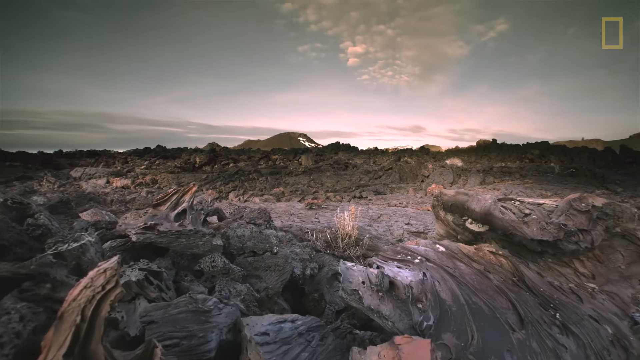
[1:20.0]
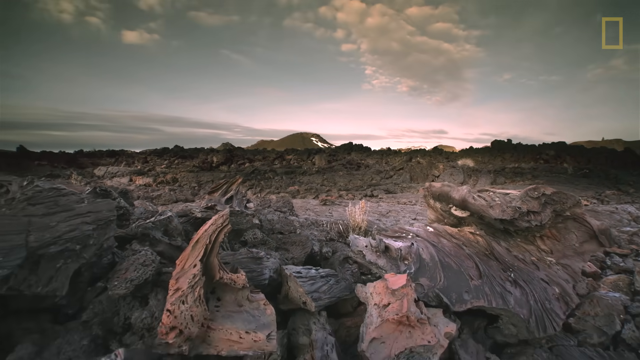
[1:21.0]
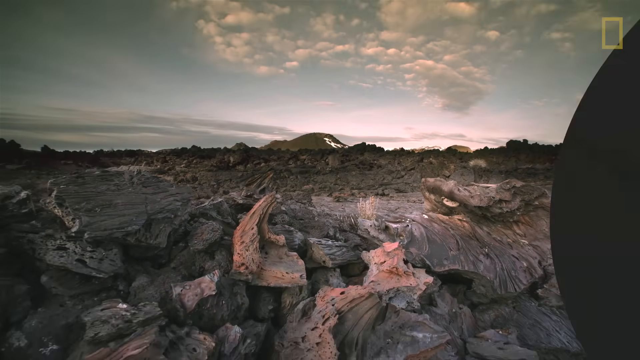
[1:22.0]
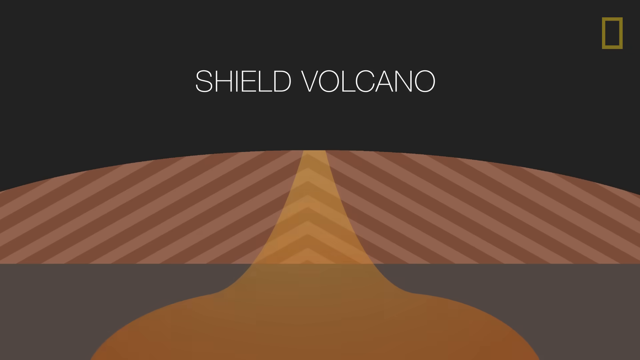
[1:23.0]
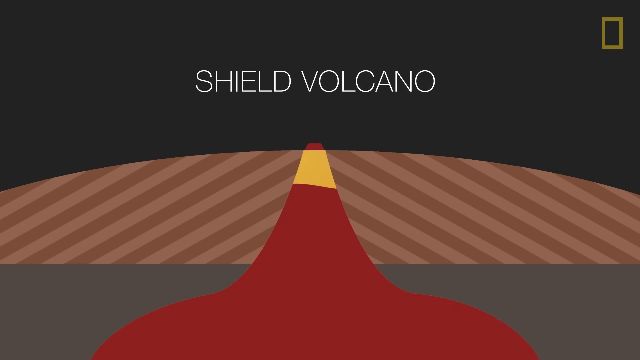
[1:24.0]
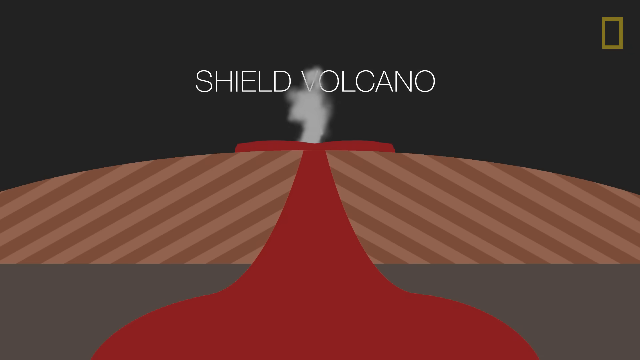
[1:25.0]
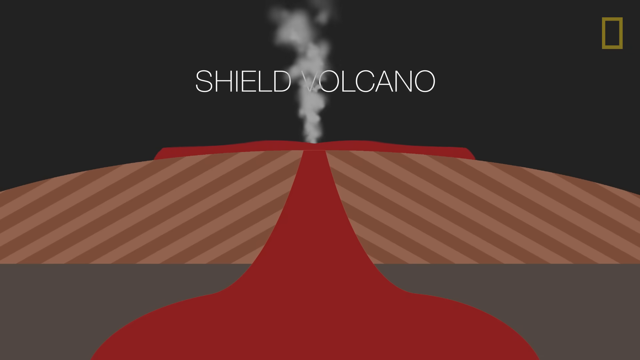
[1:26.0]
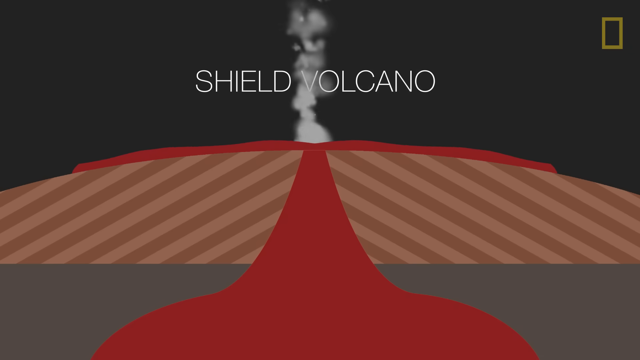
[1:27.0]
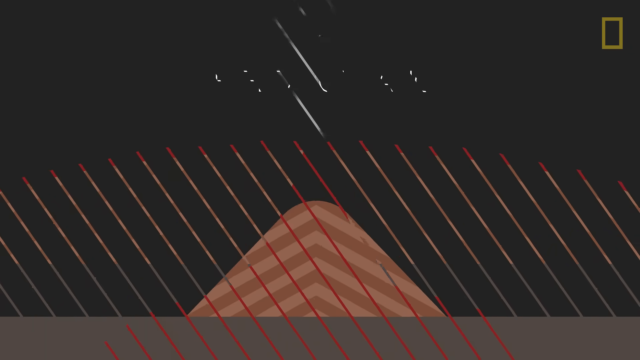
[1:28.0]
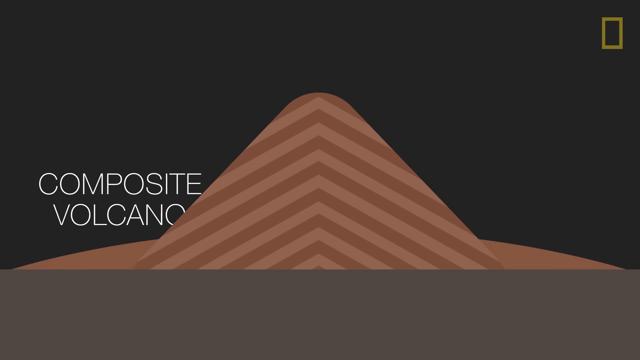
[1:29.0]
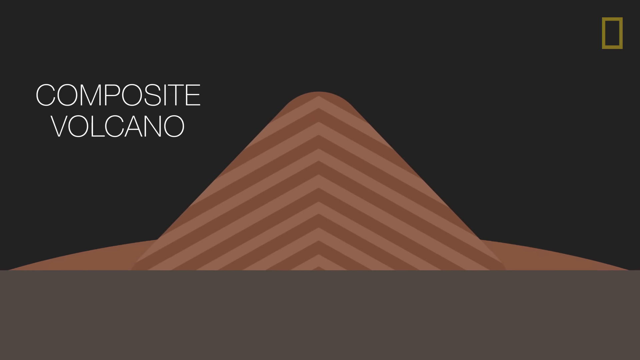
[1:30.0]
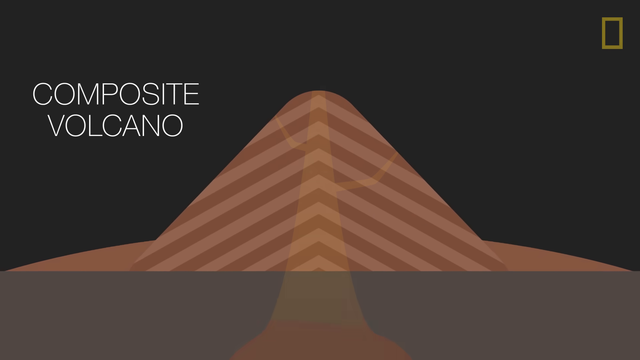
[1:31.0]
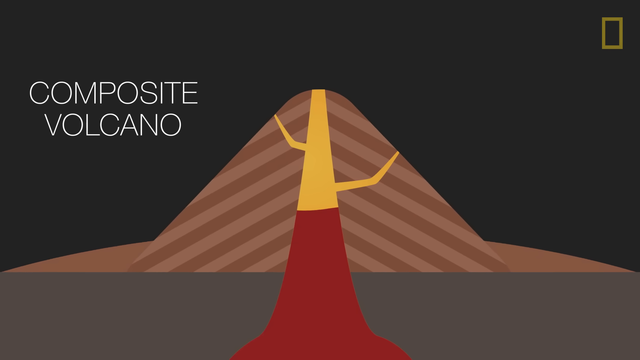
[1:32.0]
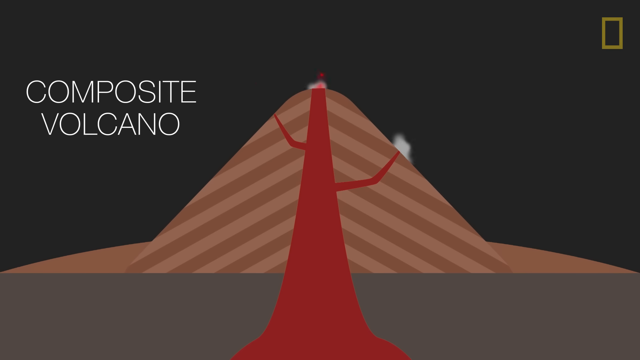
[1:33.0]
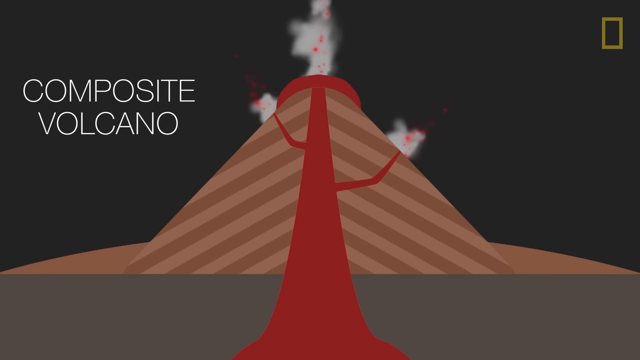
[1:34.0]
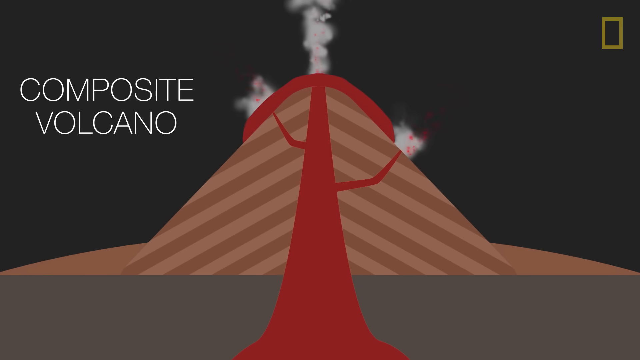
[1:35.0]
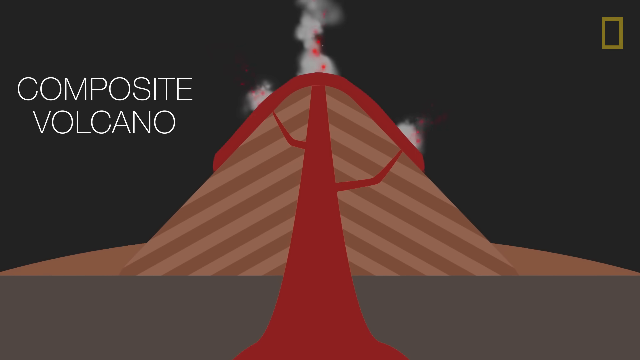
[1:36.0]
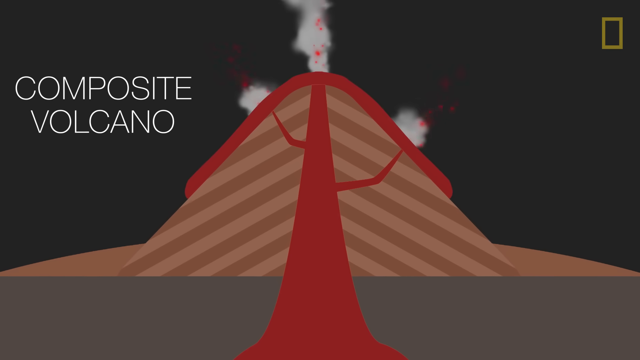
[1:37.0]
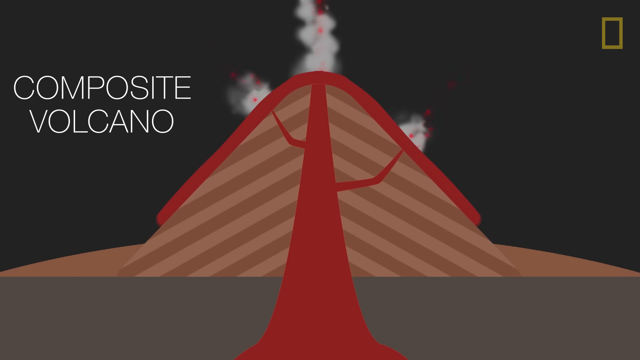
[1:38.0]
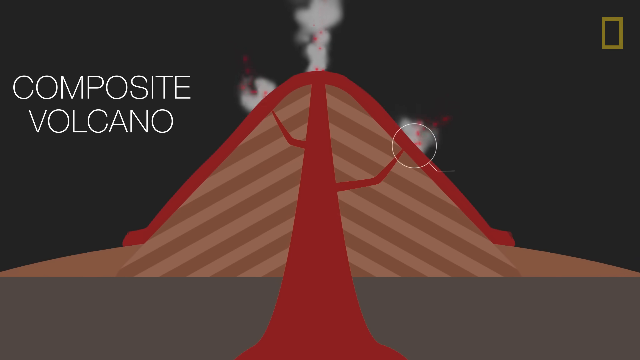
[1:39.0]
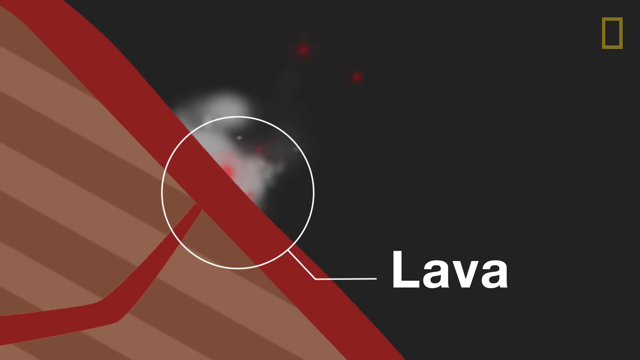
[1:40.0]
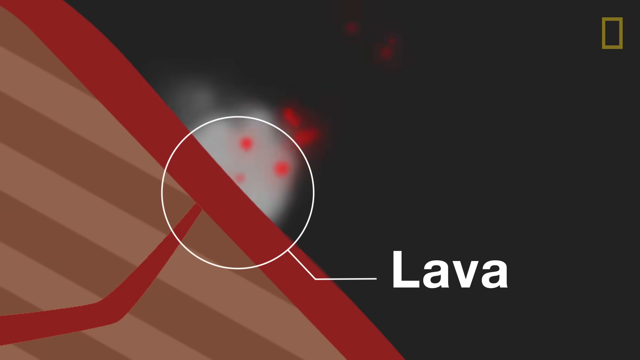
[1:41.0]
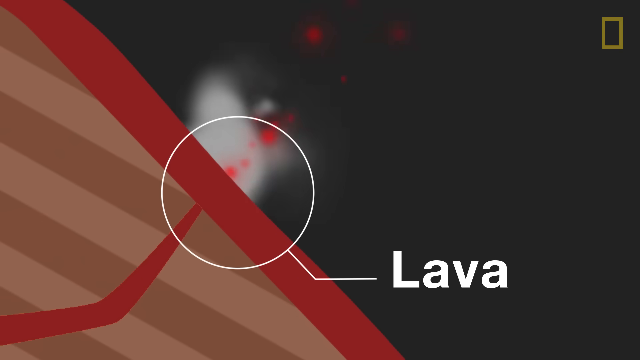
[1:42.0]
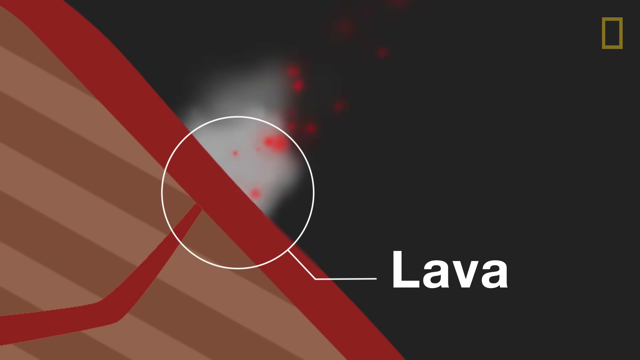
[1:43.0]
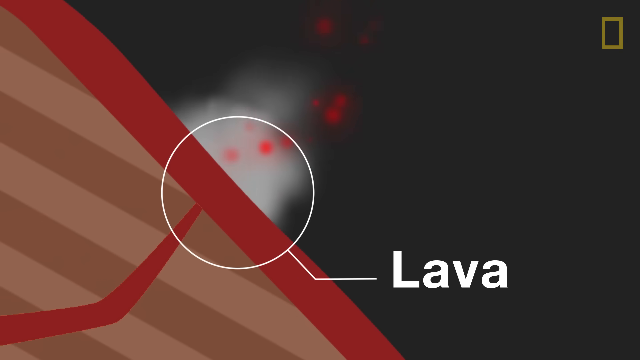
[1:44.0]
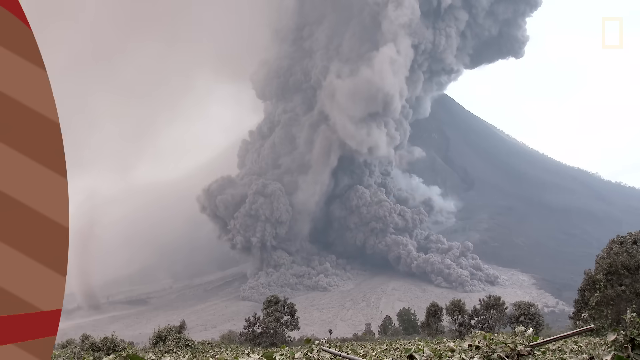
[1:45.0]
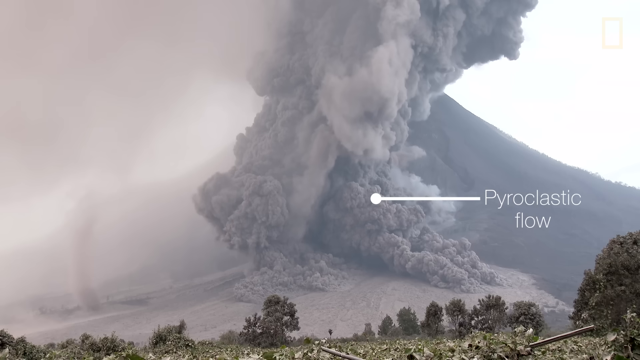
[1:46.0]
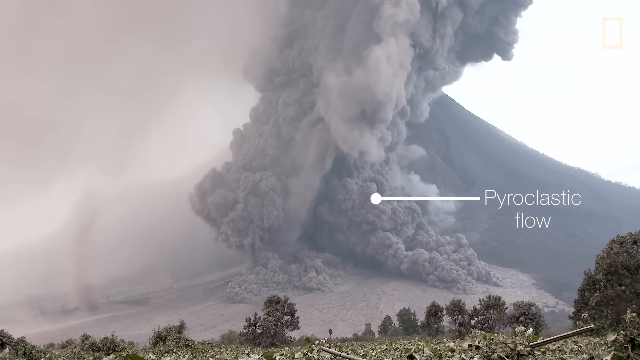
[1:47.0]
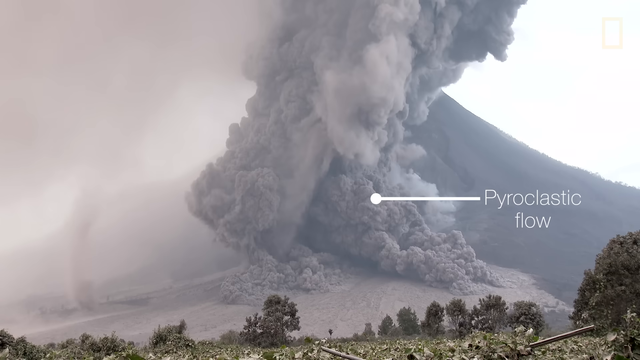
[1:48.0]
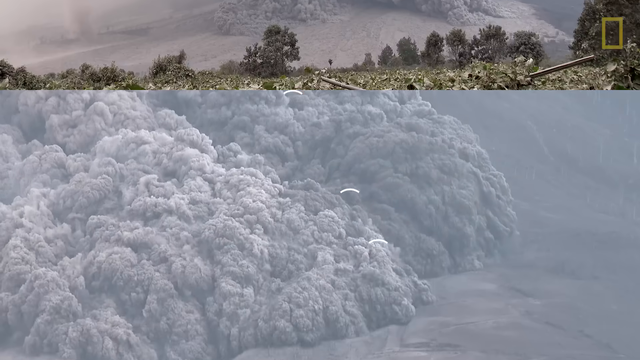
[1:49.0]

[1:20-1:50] An area of rock and grass appears under a blue sky with little white clouds, and across the bottom are what look like rocks of solidified magma. A diagram of a volcano follows with "Shield Volcano" written above it. In the center, yellow turns red from the bottom going up, and smoke comes out of it; the red then runs to the left and right over the diagram's landmass as the smoke continues to roll. Another diagram follows, labeled "composite volcano" on the left; in the center, yellow turns to red magma that comes out of the top and runs down the left and right sides. The view zooms in, with a line pointing to the red labeled "lava". Then a big smoke cloud covers almost the whole frame, with "Pyroclastic Flow" written on the right of the smoke as it slowly moves up and to the left.